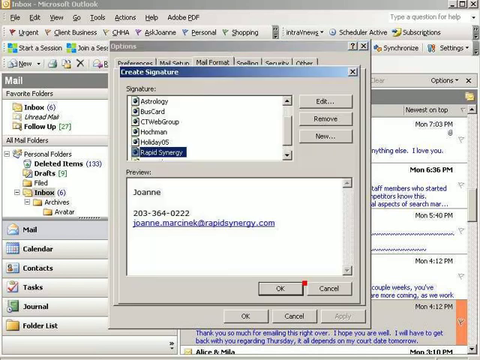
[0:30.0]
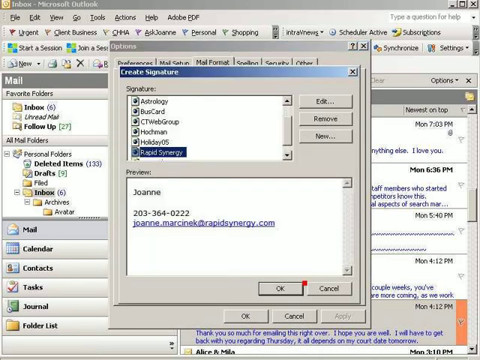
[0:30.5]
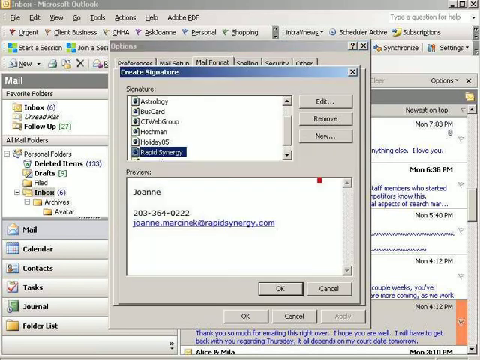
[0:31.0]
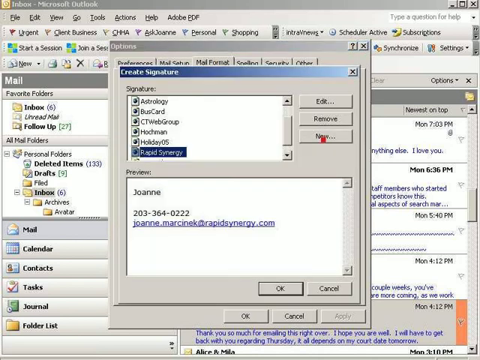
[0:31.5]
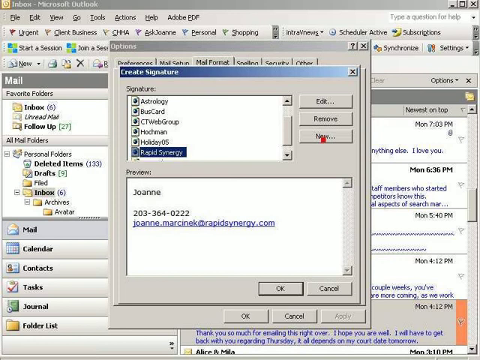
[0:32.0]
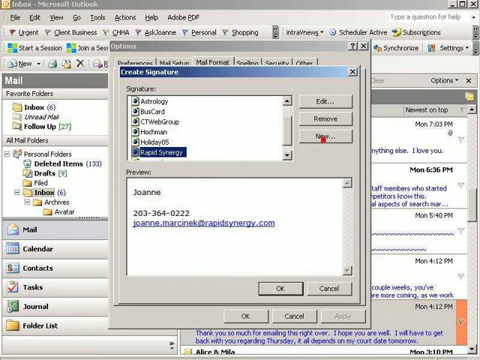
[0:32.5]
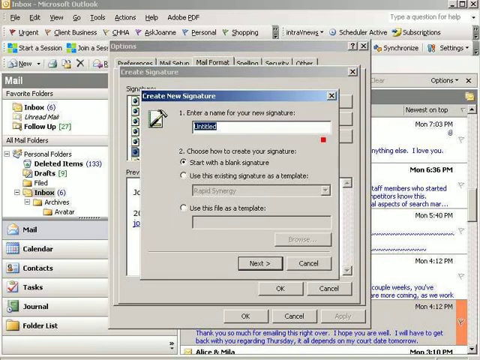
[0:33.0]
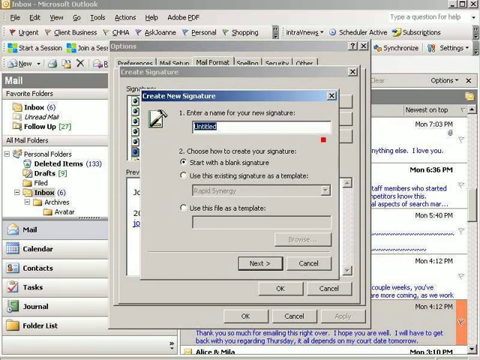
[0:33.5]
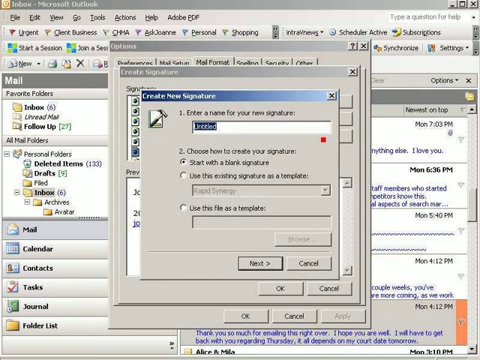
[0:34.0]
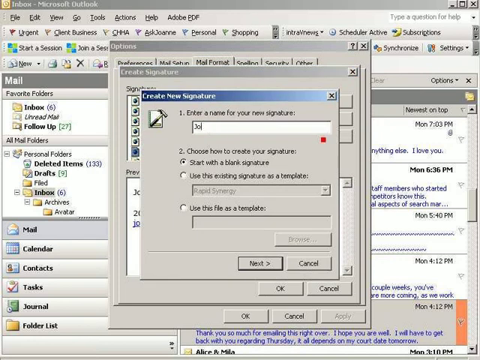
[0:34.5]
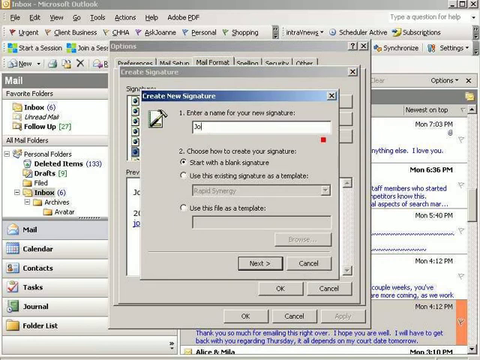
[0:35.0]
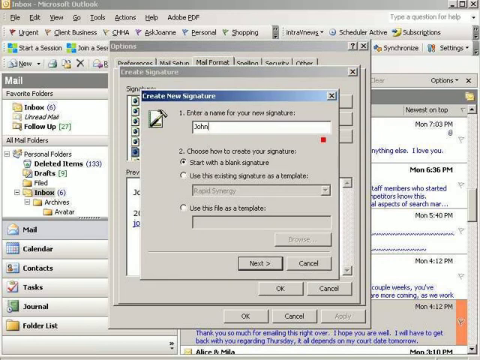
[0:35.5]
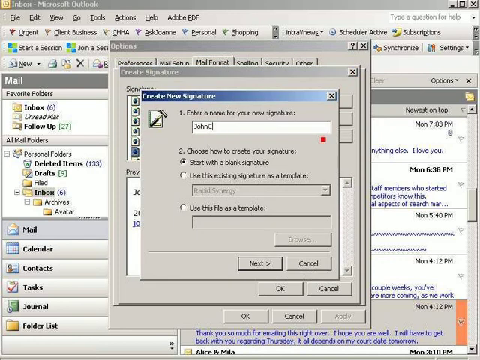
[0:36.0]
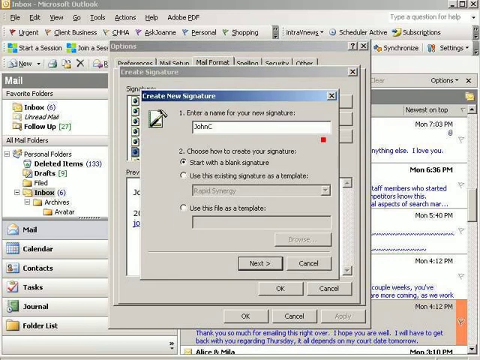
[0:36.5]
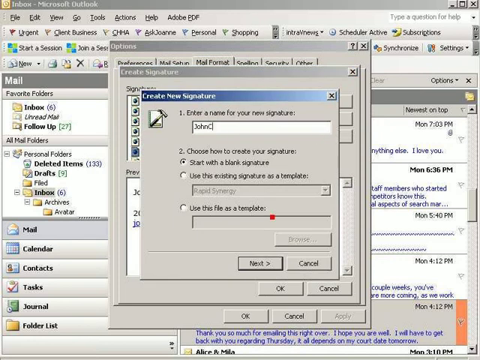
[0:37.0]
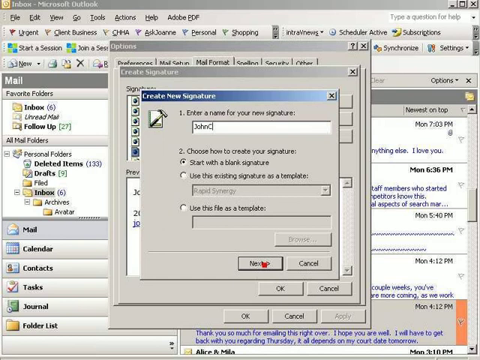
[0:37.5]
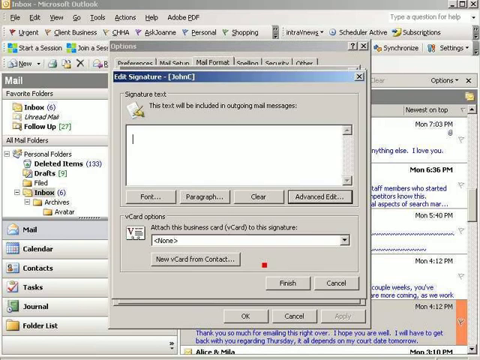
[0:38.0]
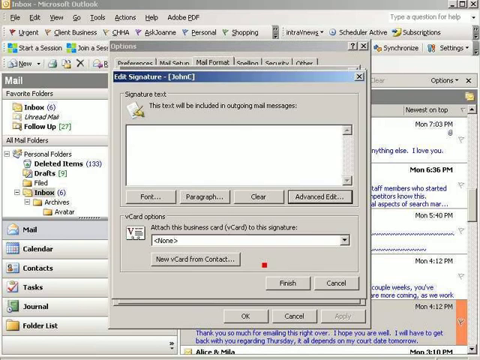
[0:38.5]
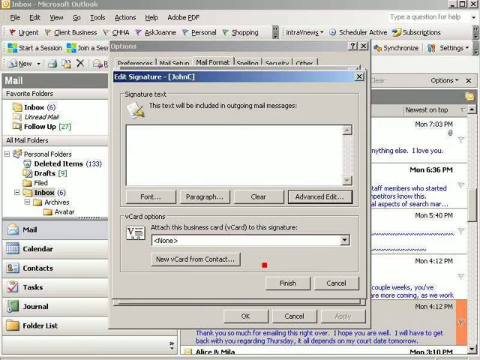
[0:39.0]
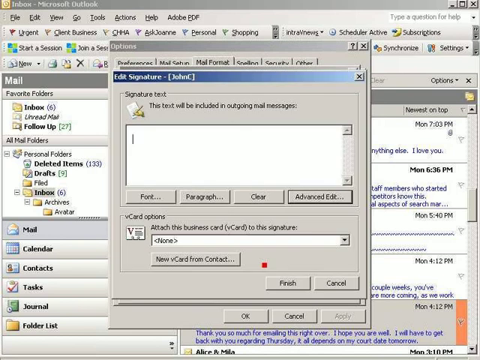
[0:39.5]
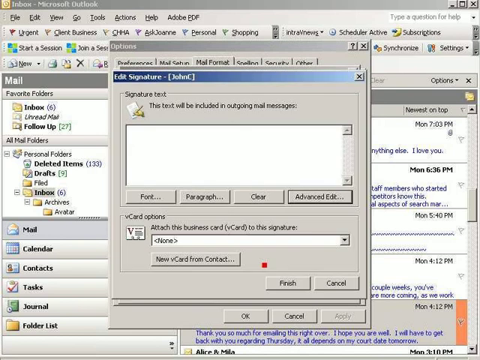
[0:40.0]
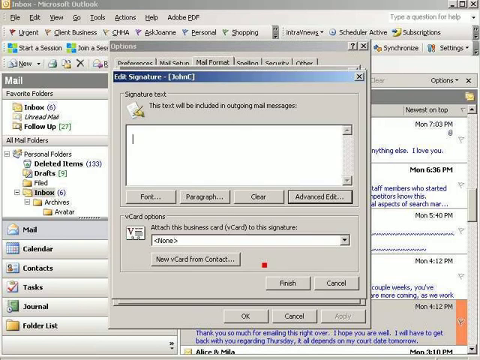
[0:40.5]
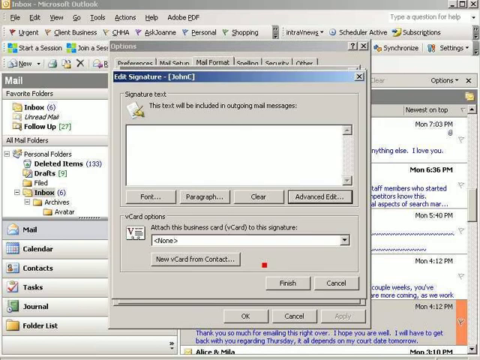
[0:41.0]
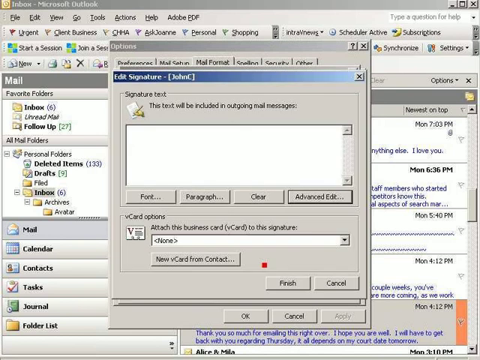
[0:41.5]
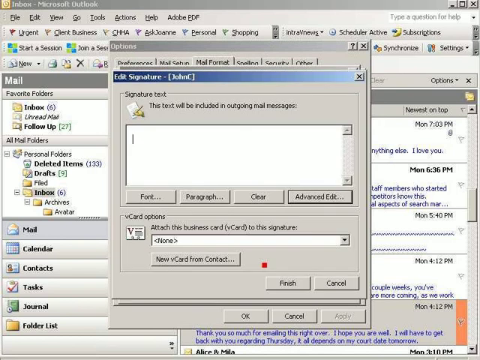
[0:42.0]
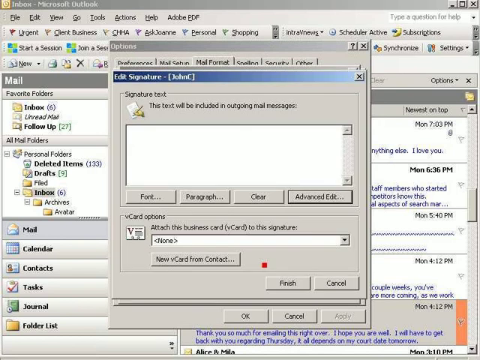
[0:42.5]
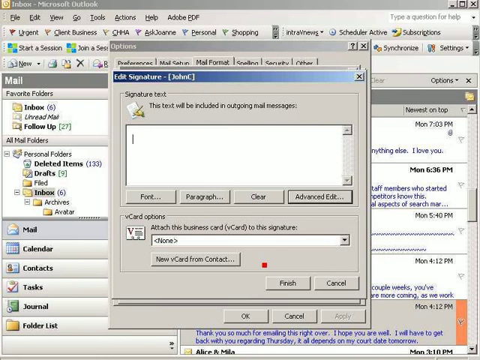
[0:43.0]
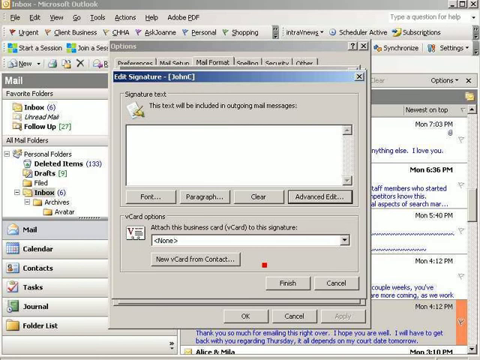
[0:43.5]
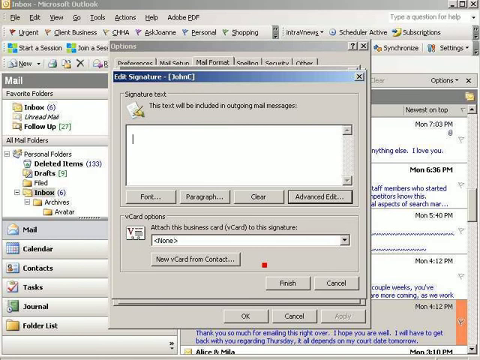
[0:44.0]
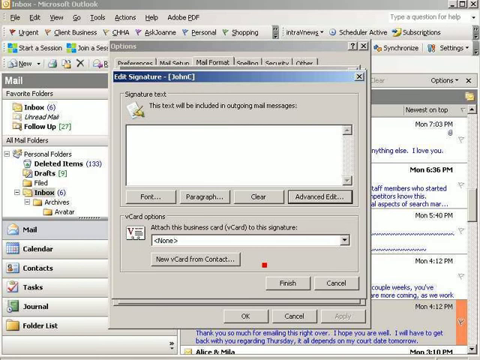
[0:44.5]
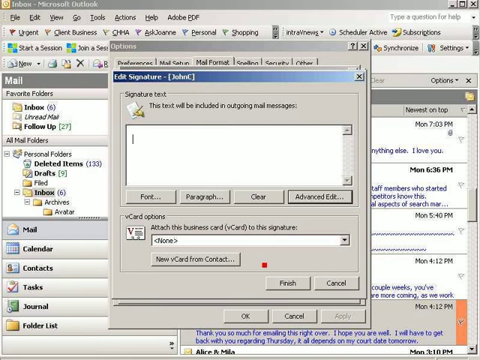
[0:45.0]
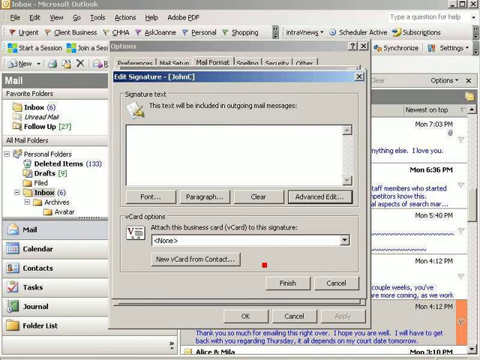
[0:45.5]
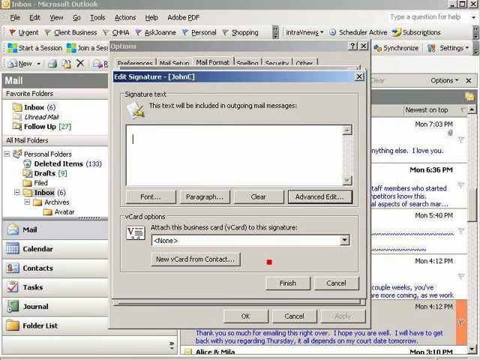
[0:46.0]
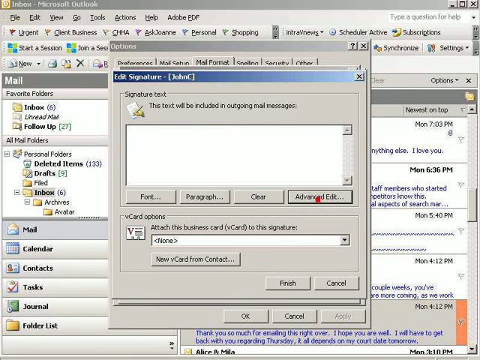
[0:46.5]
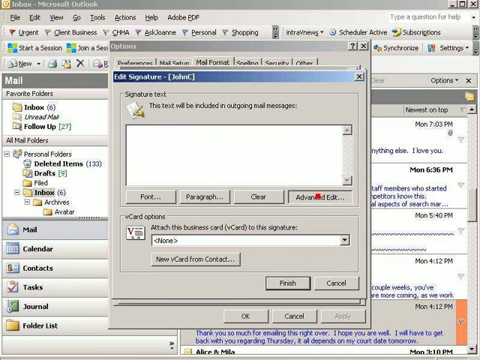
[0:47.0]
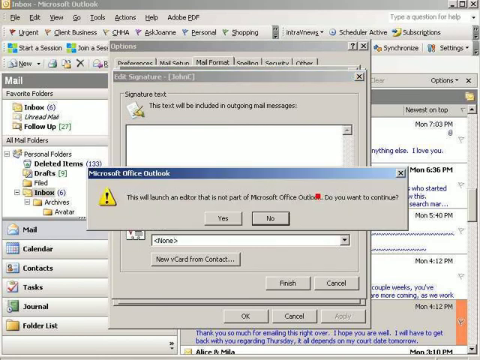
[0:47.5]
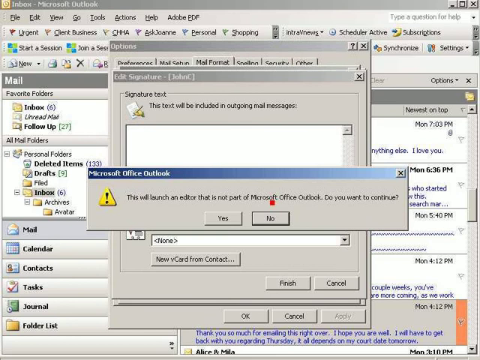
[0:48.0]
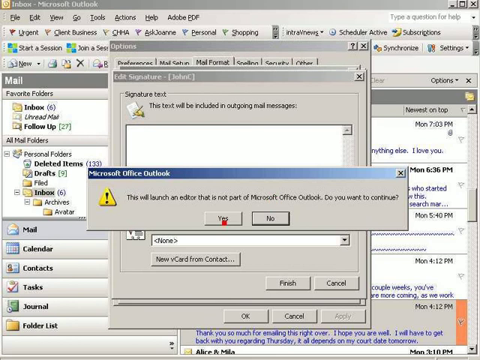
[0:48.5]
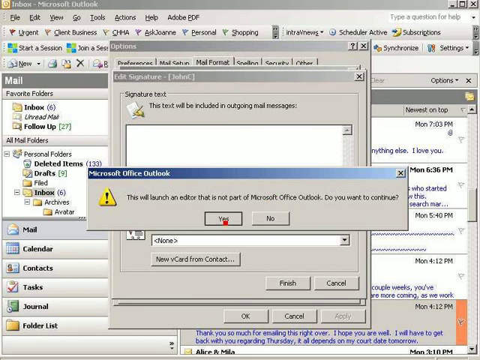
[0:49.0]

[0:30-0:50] Microsoft Outlook is open with the Create Signature options tab showing. A Rapid Synergy signature is selected, and its preview shows Joanne with the phone number 203-364-0222 and an email address. The user moves to the New option and enters the name "JohnC" as one word. They choose Start with a Blank Signature and click Next. The user then clicks Advanced Edit, and a pop-up window appears saying an editor will launch that is not part of Microsoft Outlook and asking "Do you want to continue?", with yes and no buttons.